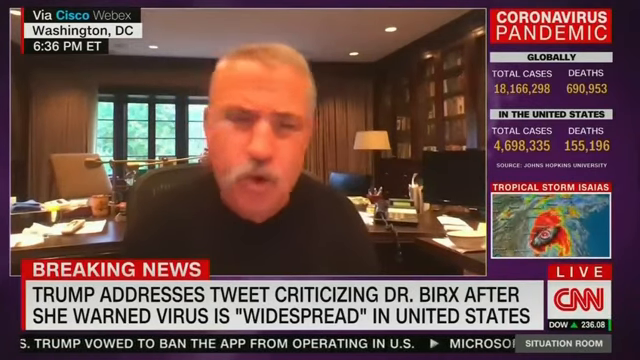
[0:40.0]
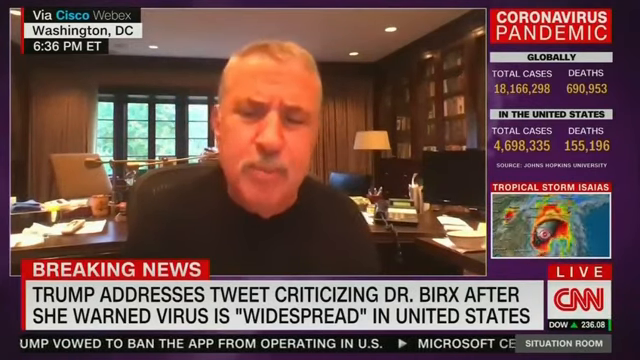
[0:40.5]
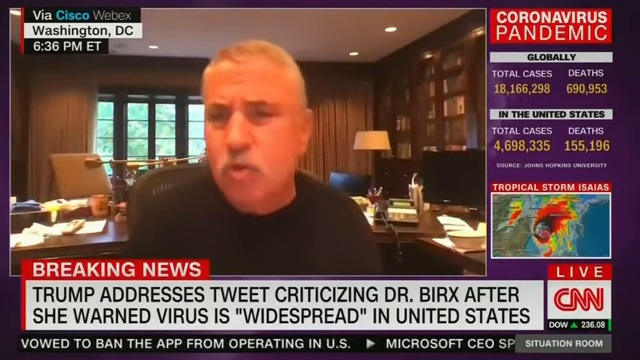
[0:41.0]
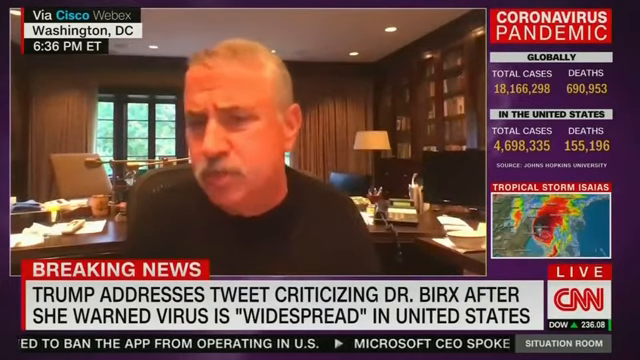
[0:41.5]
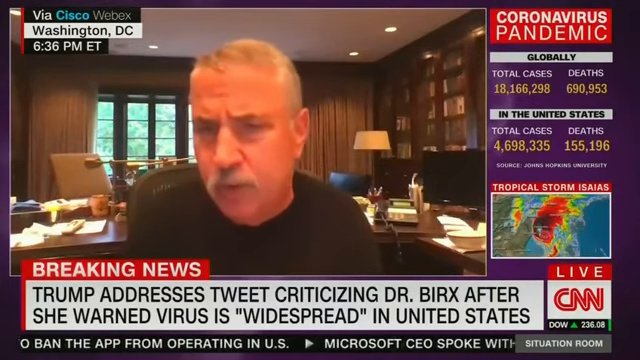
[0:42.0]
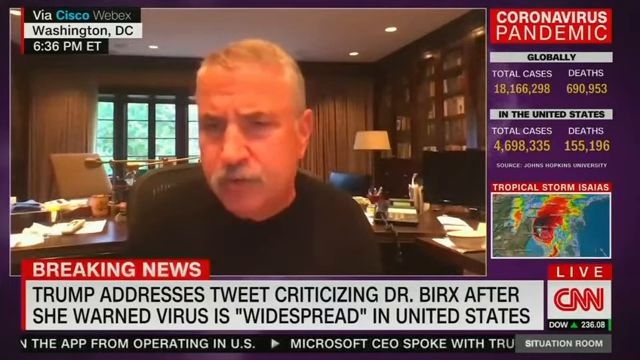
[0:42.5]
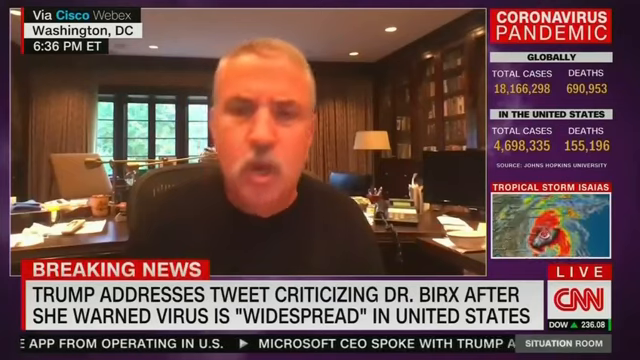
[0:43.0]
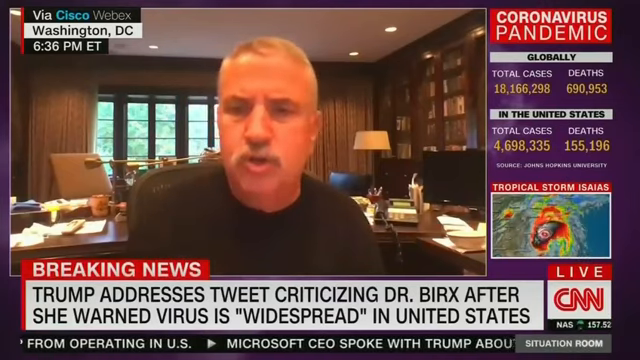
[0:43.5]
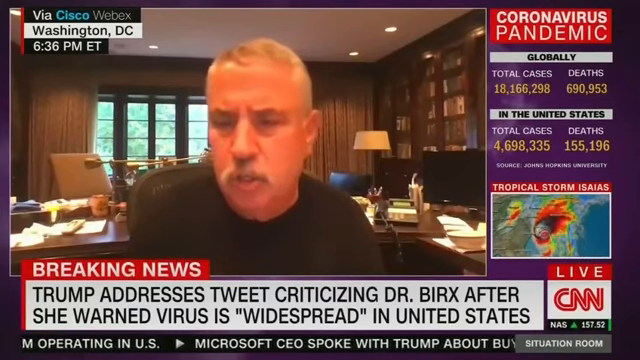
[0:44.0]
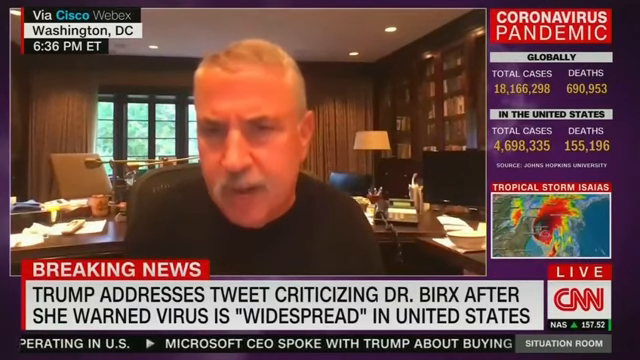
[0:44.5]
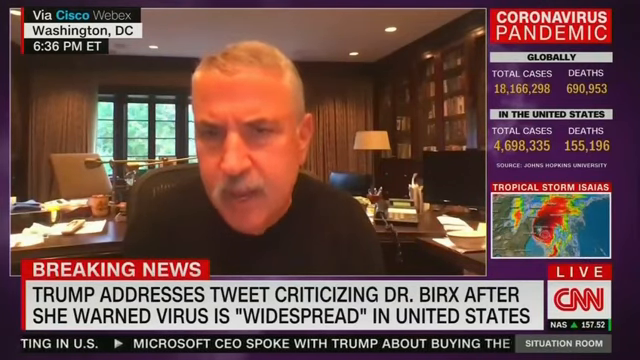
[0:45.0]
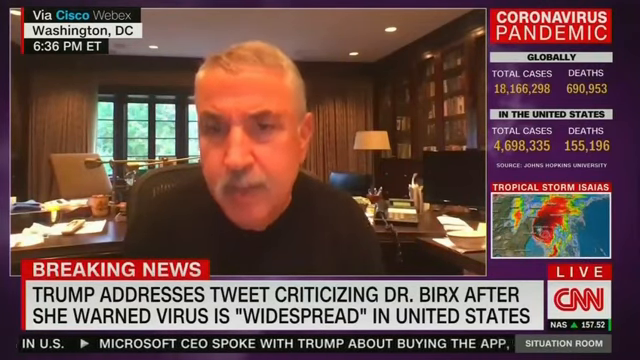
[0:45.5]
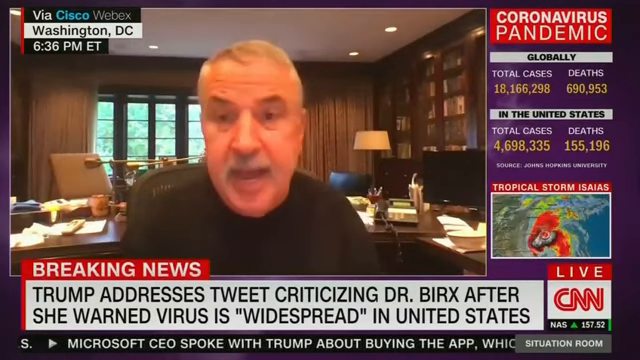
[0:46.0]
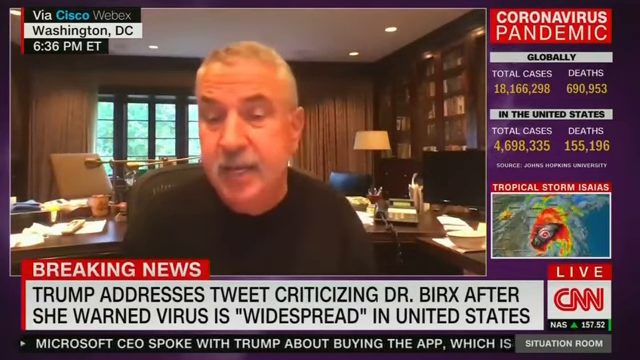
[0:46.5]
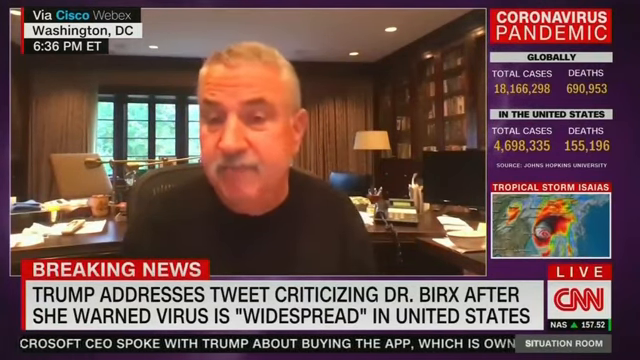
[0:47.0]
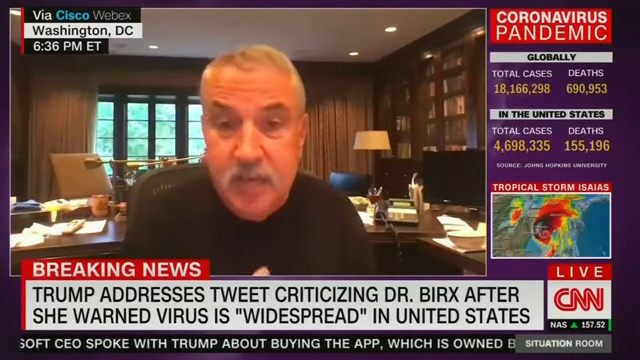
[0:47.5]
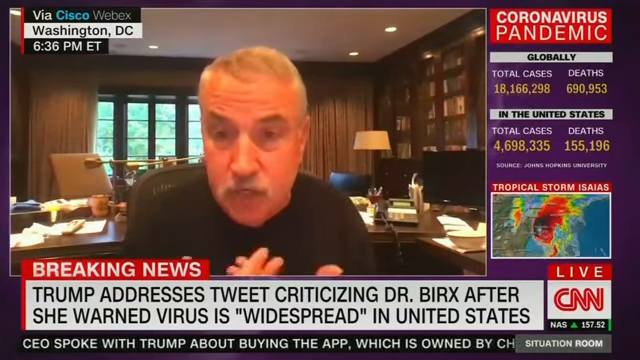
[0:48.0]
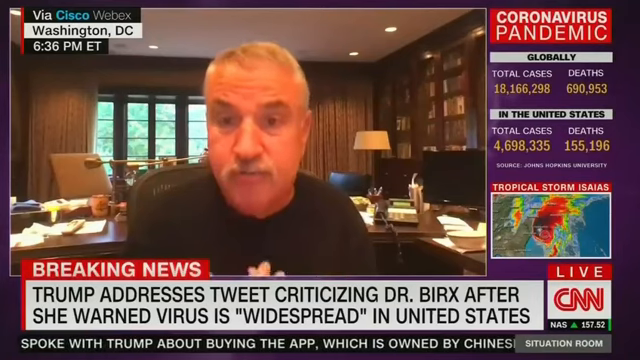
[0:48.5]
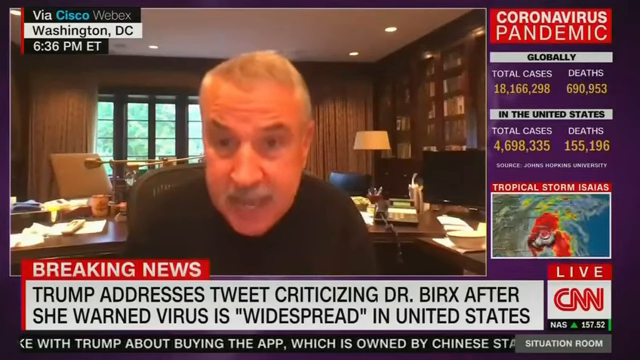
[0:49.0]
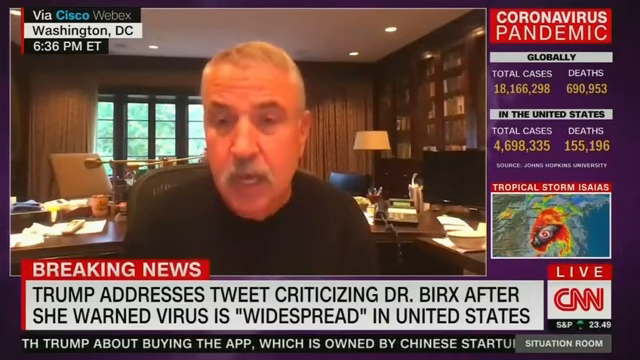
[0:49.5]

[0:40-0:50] A man appears on a webcam in Washington, D.C., with the time 6:36 PM shown. He wears a black top, has a mustache, and seems to be in his home office. A breaking news banner reads "Trump addresses tweet criticizing Dr. Birx after she warned virus is widespread in the United States." Text reads "coronavirus pandemic globally" with total cases and deaths, plus total cases and deaths in the United States, and tropical storm Isaias is being tracked. There is a lot going on on the screen. The broadcast is live on CNN. The man talks for the whole shot.